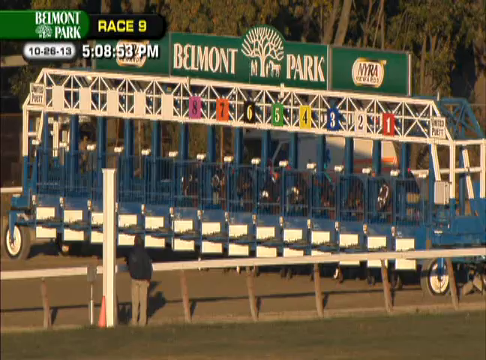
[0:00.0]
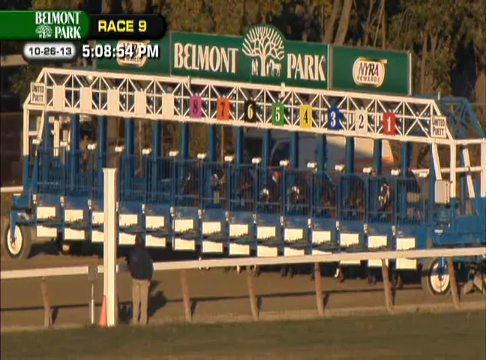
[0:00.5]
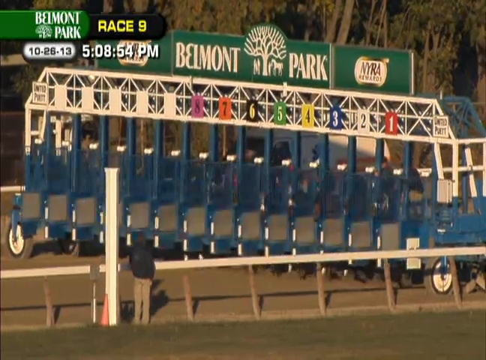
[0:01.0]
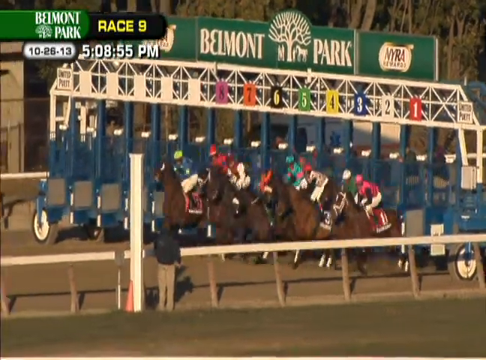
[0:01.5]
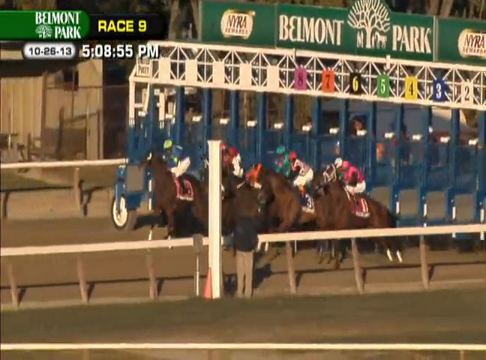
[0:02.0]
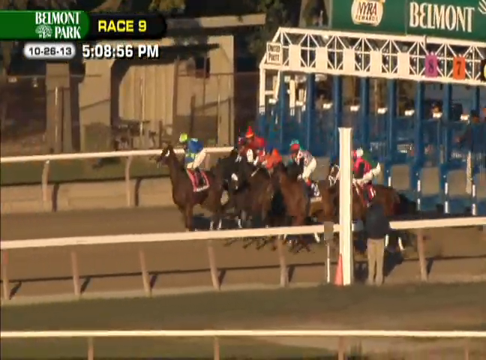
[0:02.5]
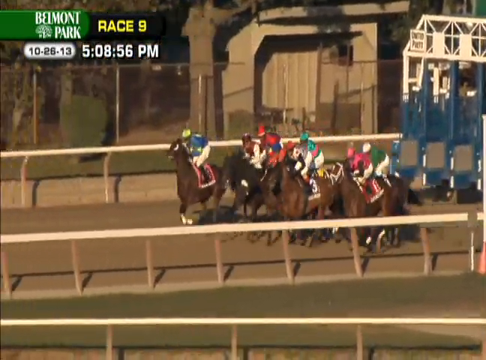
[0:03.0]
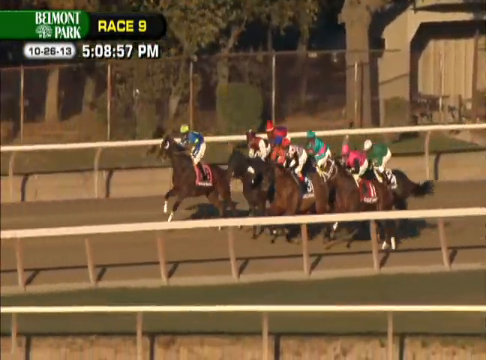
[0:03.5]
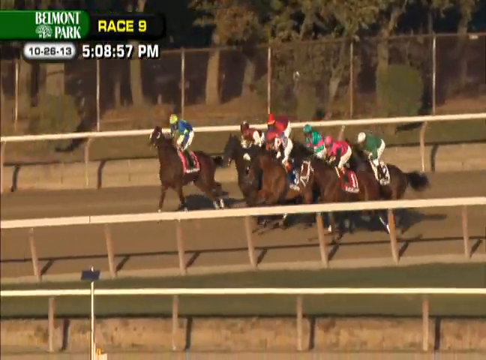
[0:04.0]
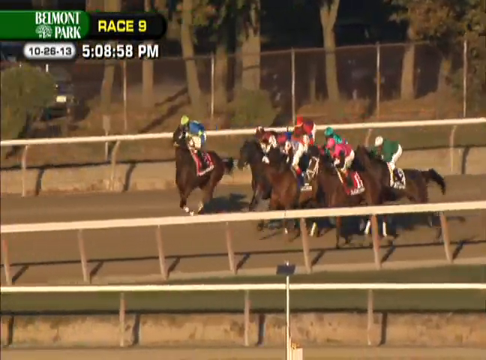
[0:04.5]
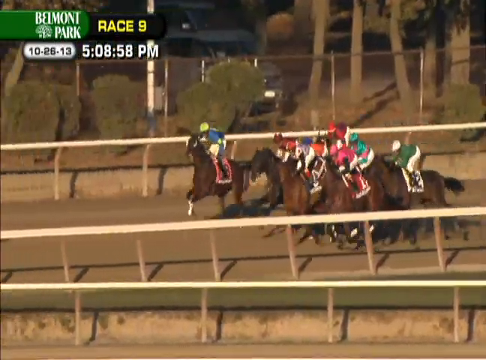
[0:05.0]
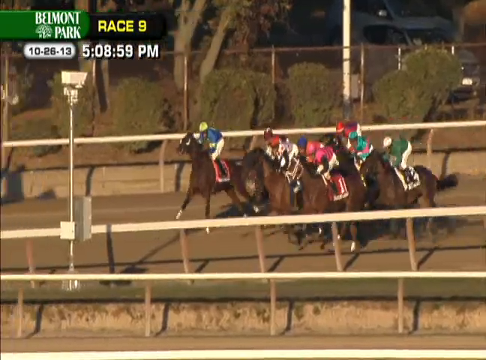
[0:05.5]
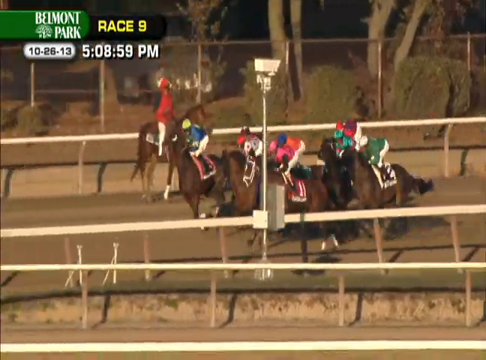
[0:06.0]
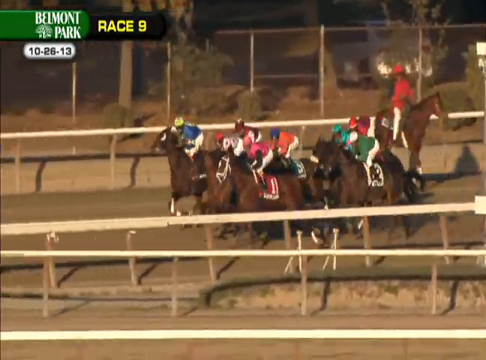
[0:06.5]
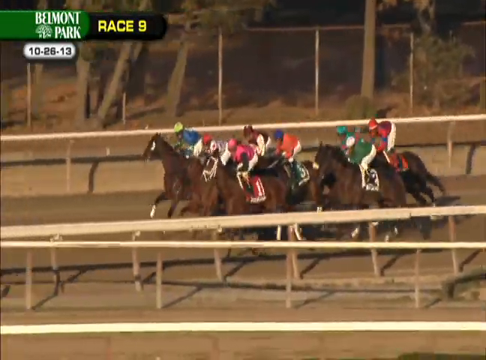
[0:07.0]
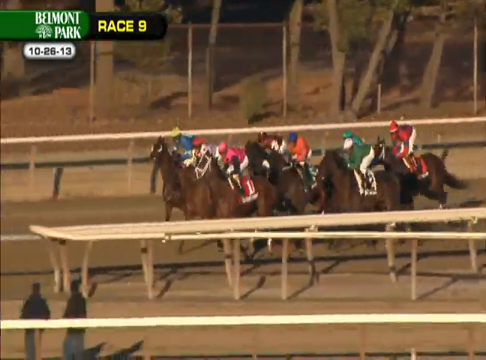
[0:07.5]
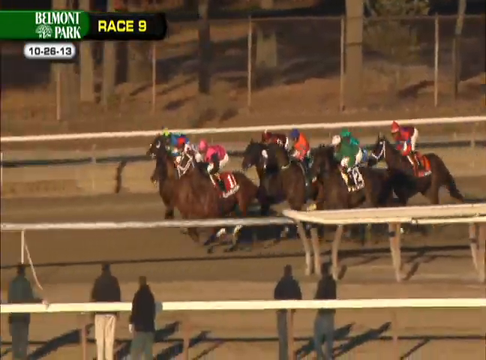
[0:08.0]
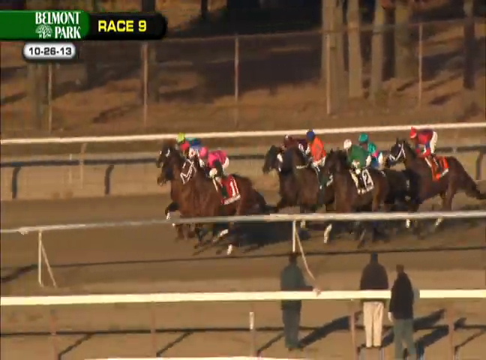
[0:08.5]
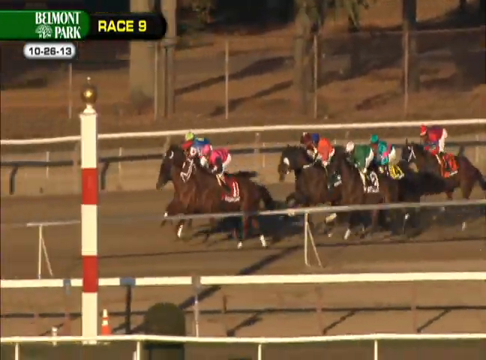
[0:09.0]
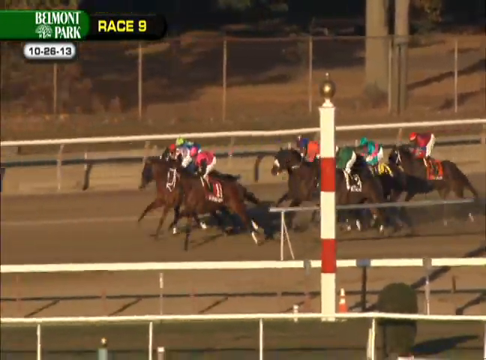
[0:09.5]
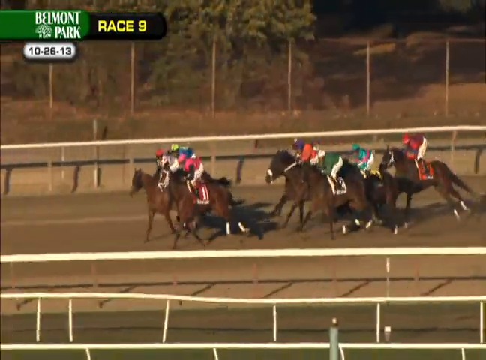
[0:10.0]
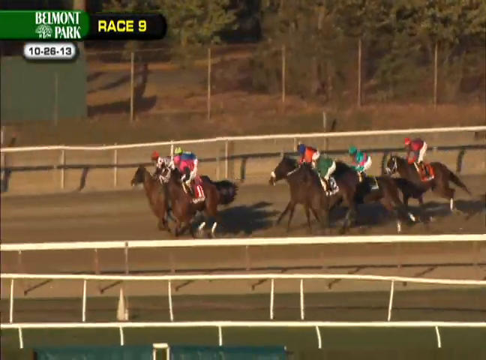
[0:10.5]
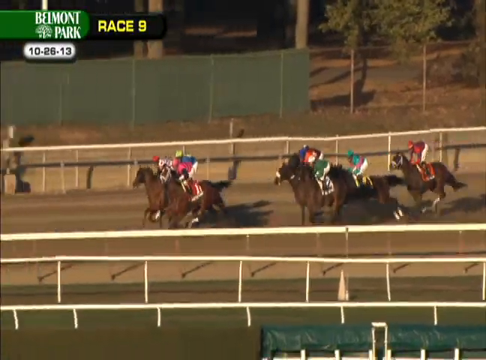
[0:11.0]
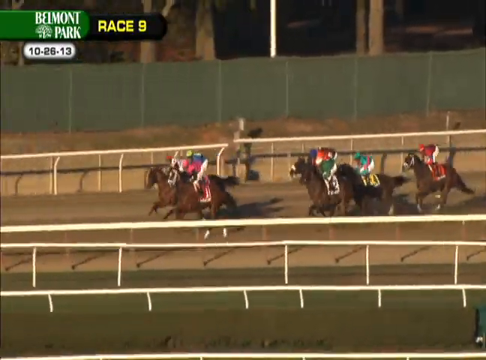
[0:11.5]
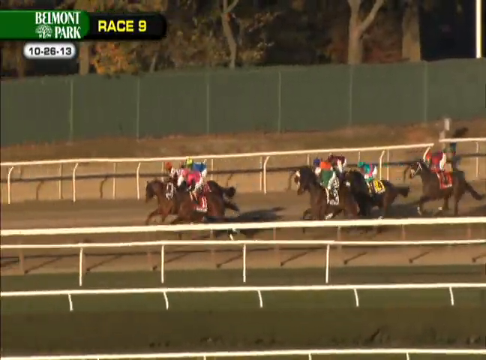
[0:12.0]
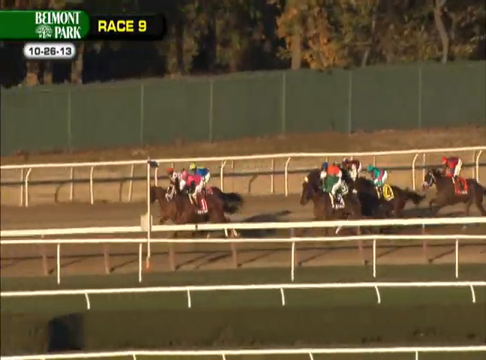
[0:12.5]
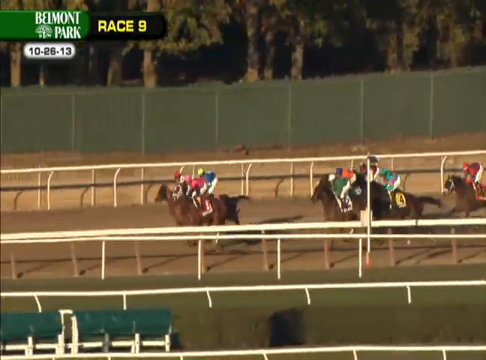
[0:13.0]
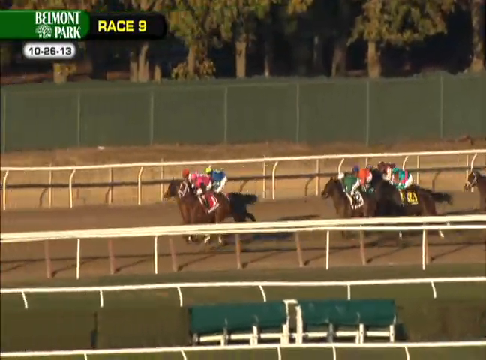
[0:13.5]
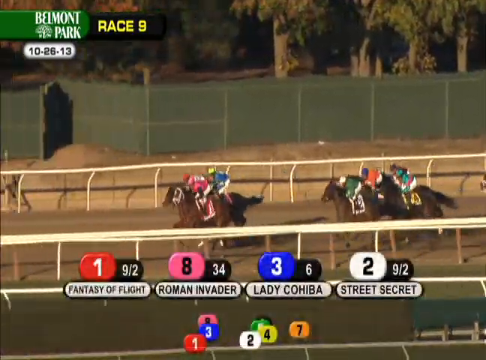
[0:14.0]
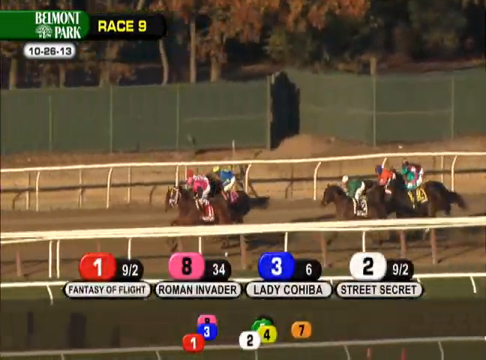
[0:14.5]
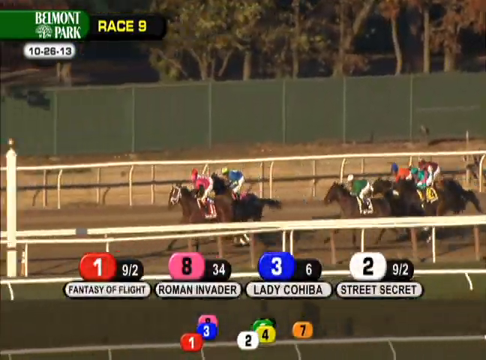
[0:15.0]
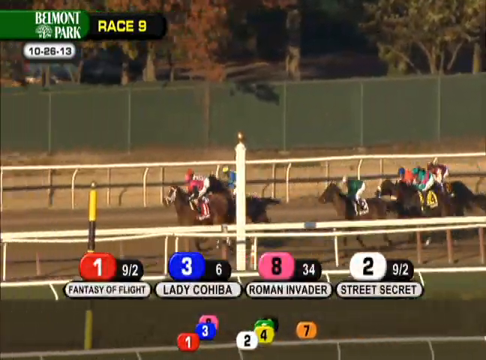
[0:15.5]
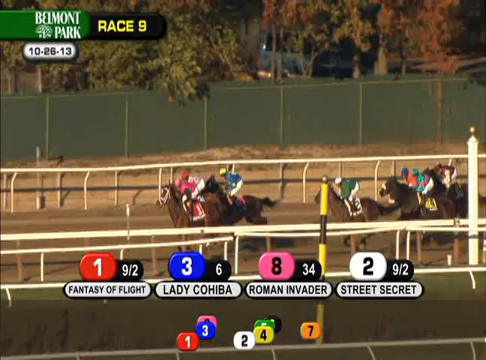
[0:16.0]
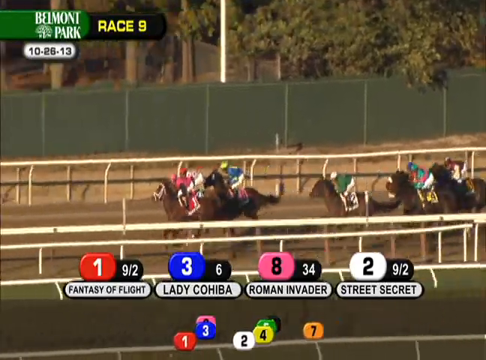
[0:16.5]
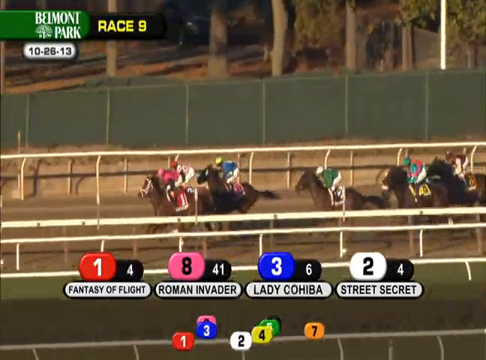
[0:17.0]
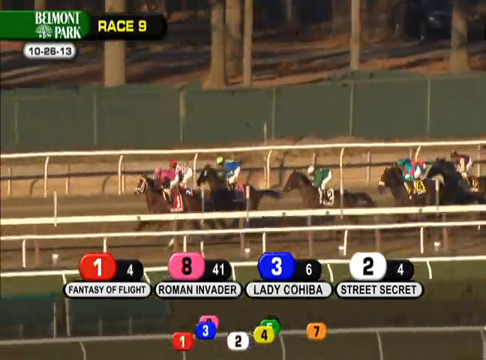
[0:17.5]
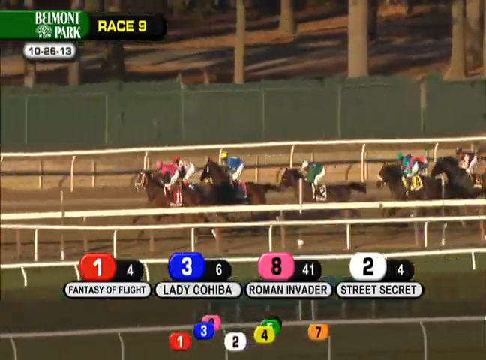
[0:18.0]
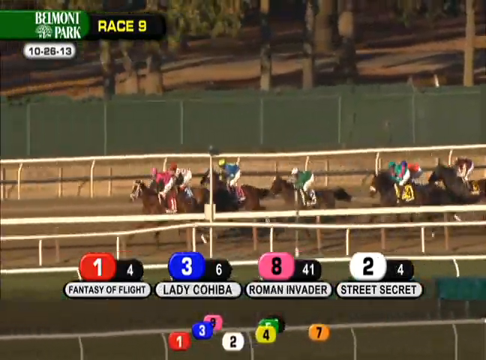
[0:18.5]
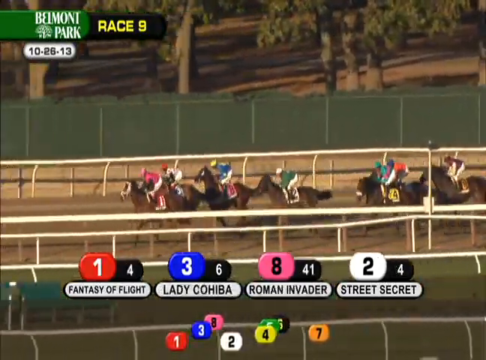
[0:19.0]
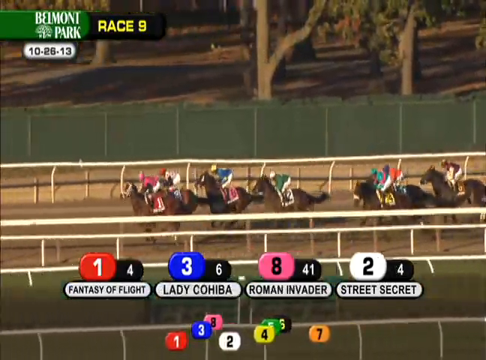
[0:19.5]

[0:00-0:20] A horse race begins. At the starting line, a logo for Belmont Park overlooks the starting gate. As the gates open, four horses, all ridden by jockeys, run out and race down the track. An indicator at the top of the screen shows that this is the ninth race of the day at Belmont Park, taking place on October 26, 2013. The horses race down the track, passing white guardrails. Place markers appear superimposed on the screen, showing number 1 is Fantasy of Flight, number 8 is Roman Invader, number 3 is Lady Cohiba, and number 2 is Street Secret. As the horses continue down the field, more numbers appear on the screen indicating their positions in the race. The horses pass several people standing off the track.